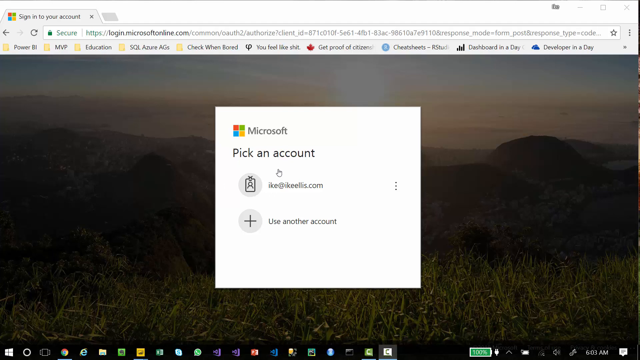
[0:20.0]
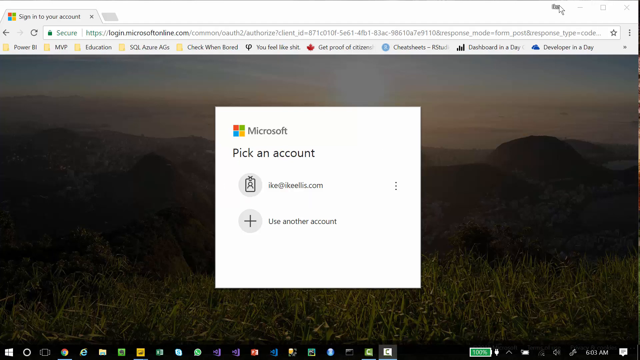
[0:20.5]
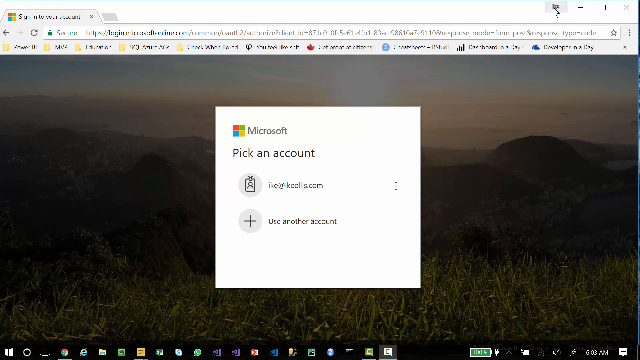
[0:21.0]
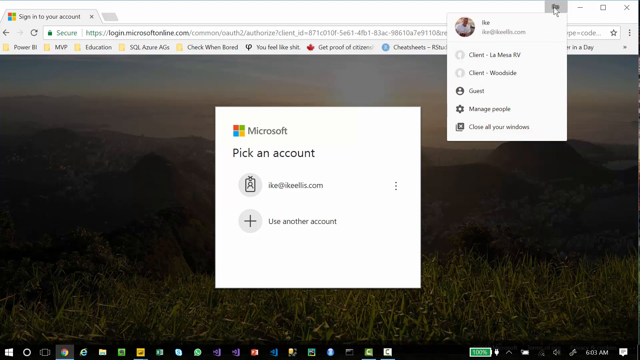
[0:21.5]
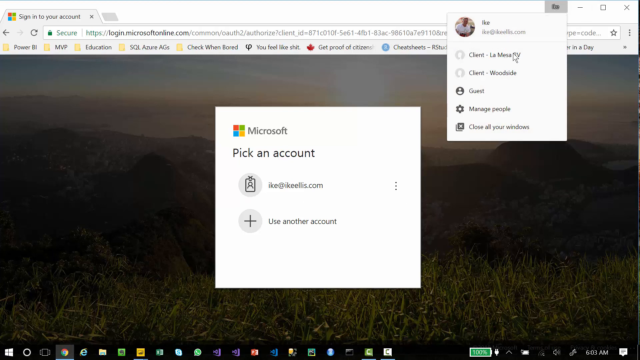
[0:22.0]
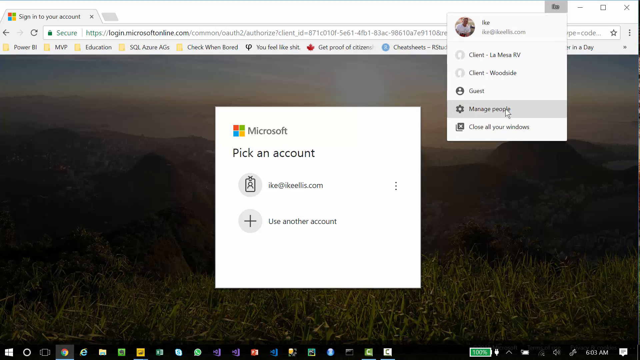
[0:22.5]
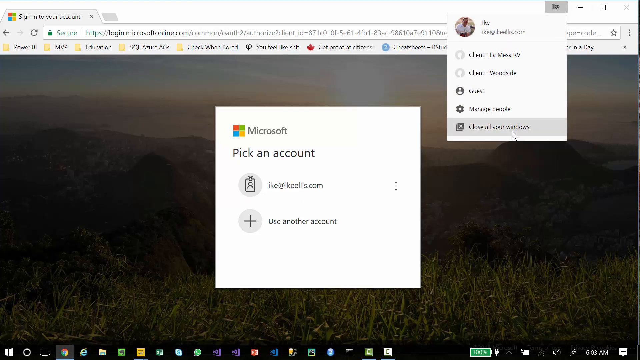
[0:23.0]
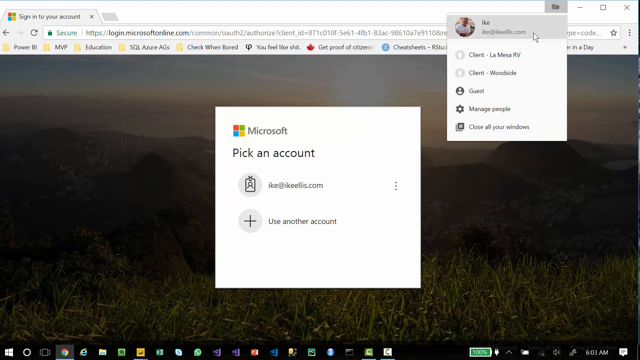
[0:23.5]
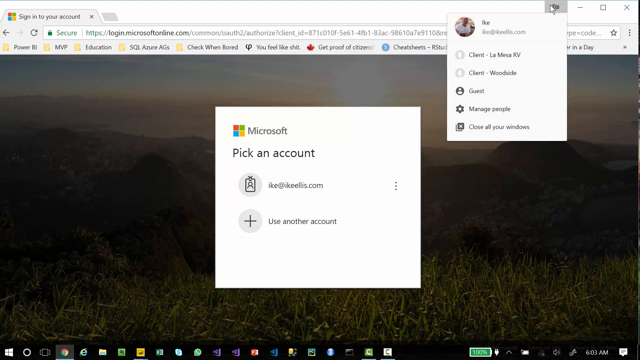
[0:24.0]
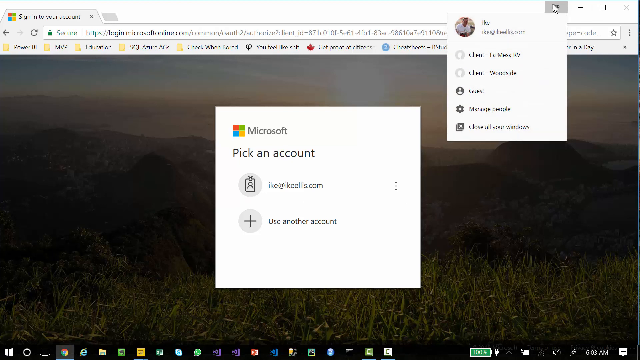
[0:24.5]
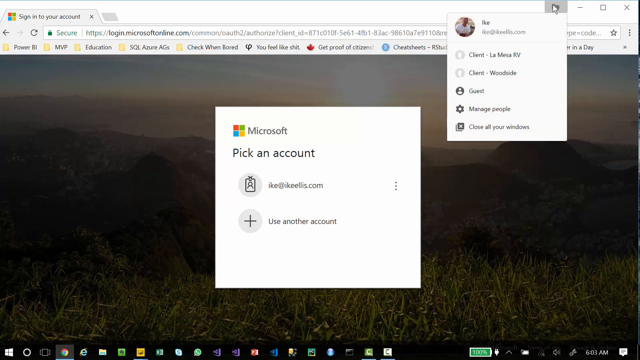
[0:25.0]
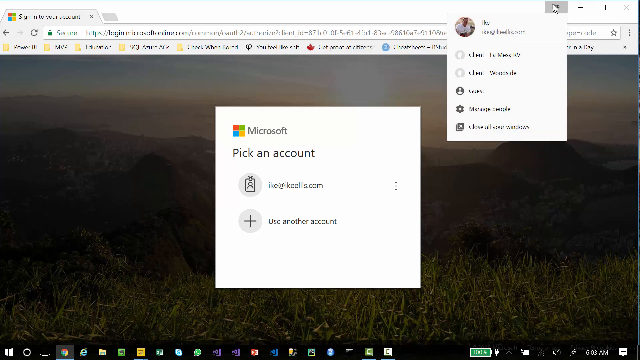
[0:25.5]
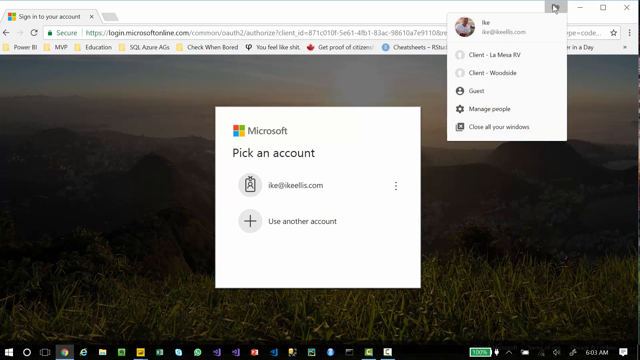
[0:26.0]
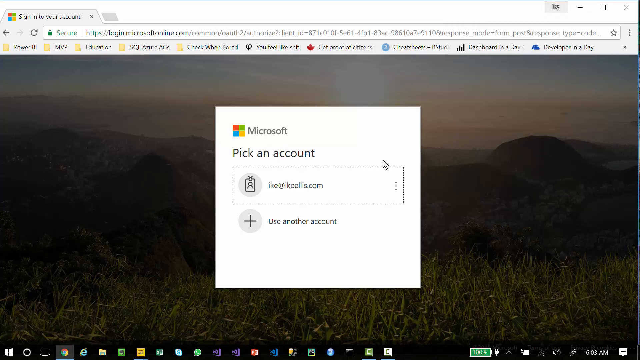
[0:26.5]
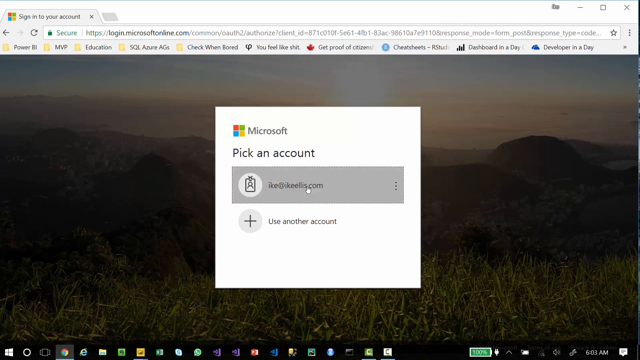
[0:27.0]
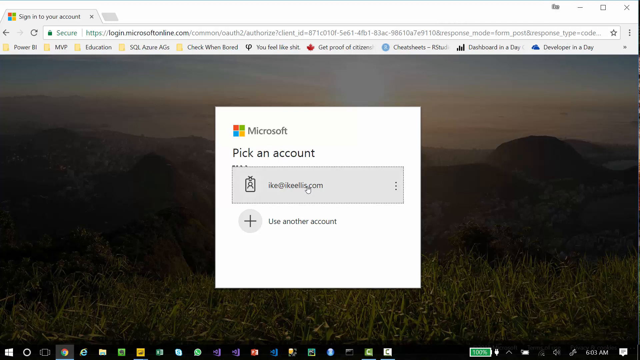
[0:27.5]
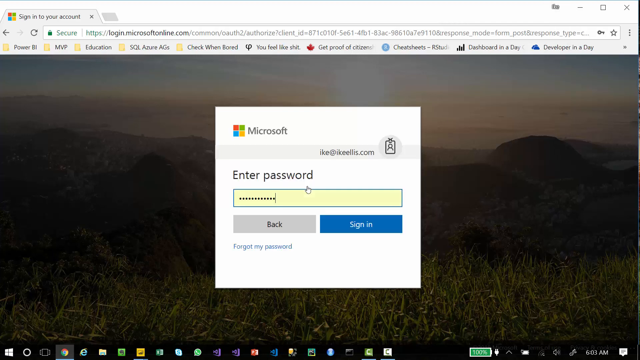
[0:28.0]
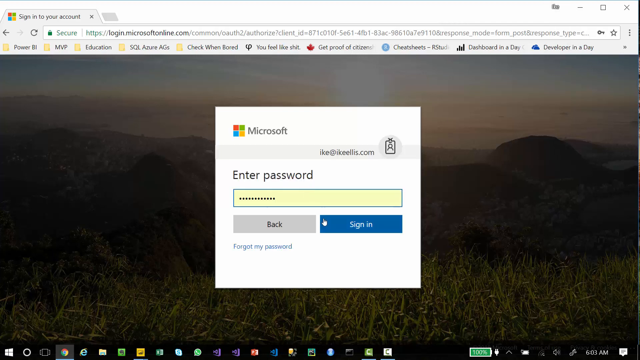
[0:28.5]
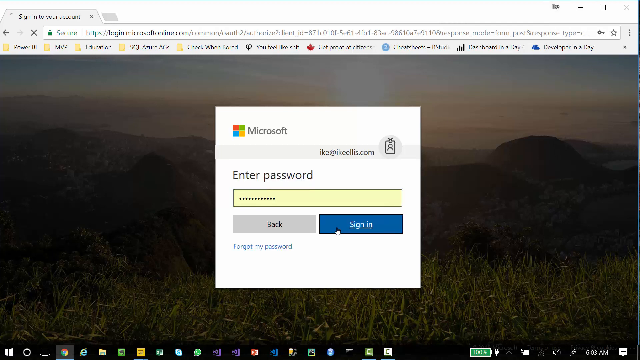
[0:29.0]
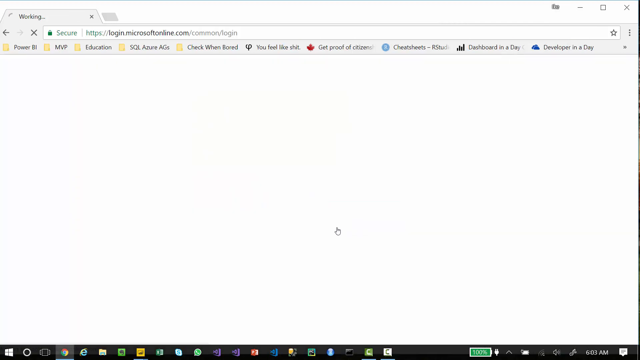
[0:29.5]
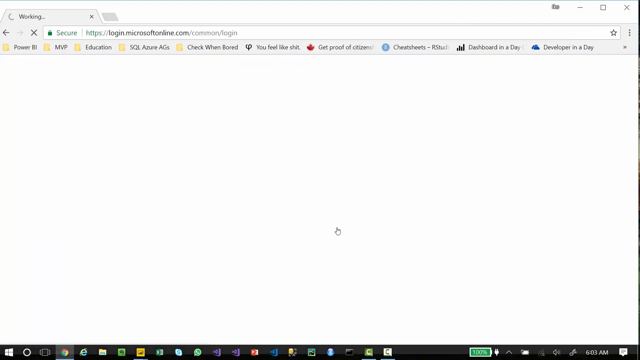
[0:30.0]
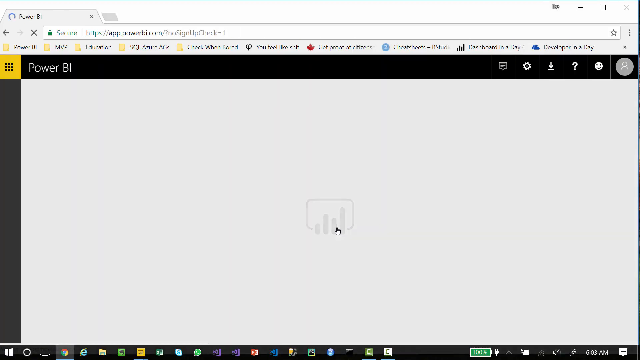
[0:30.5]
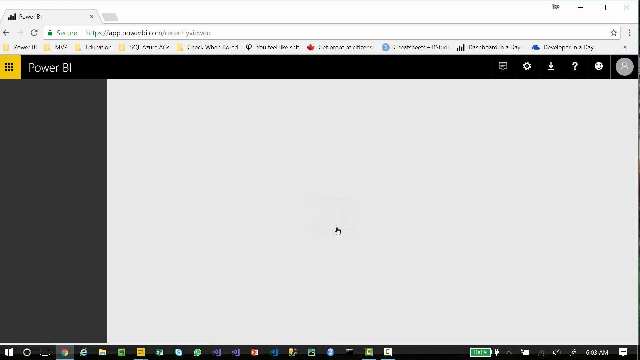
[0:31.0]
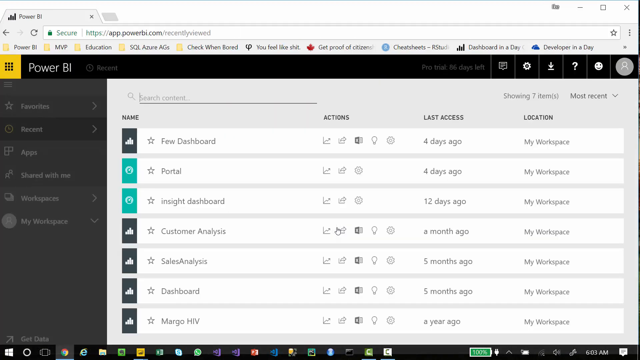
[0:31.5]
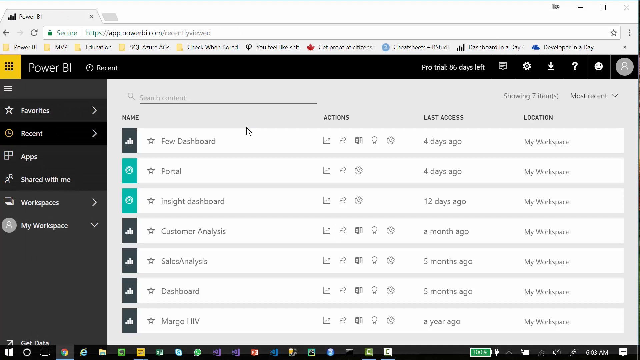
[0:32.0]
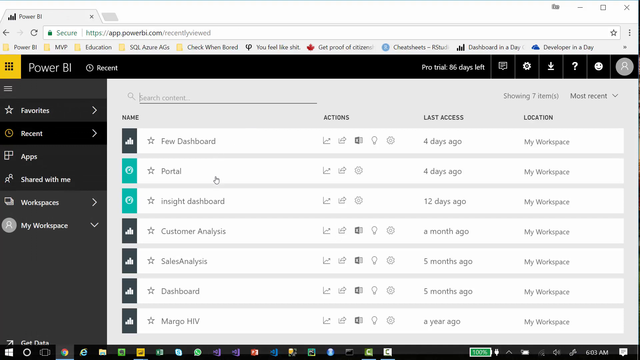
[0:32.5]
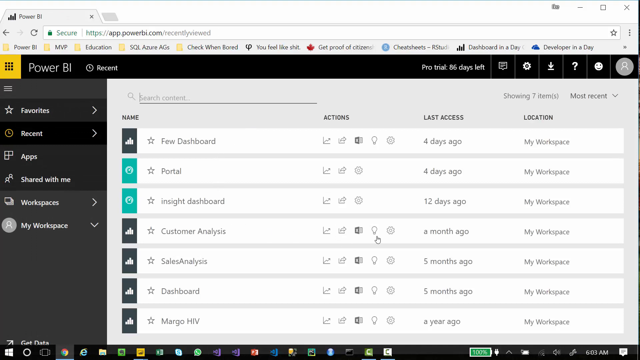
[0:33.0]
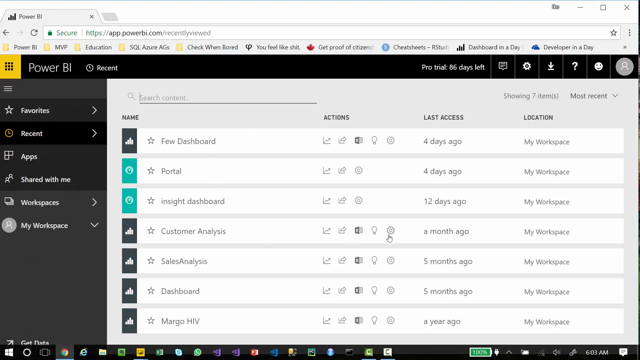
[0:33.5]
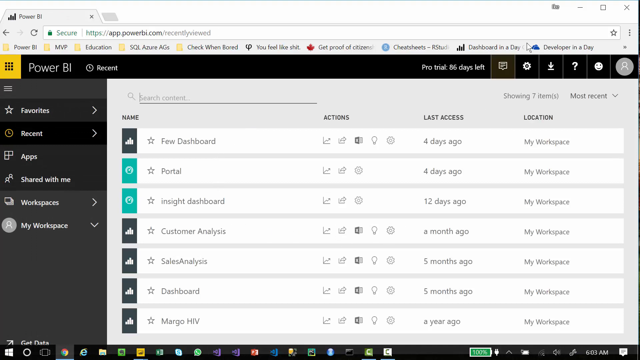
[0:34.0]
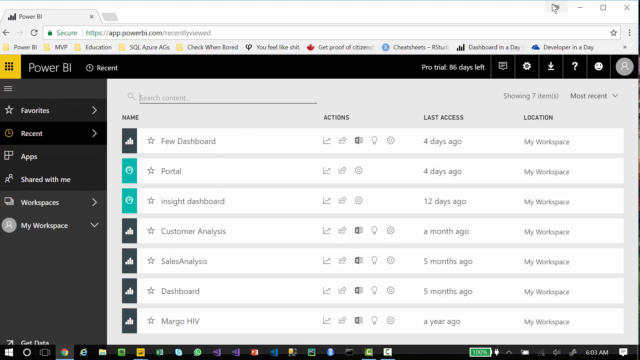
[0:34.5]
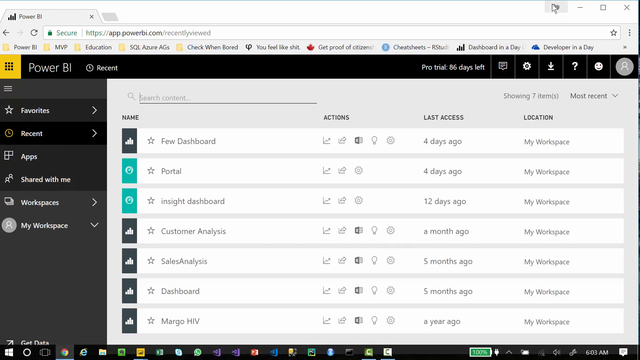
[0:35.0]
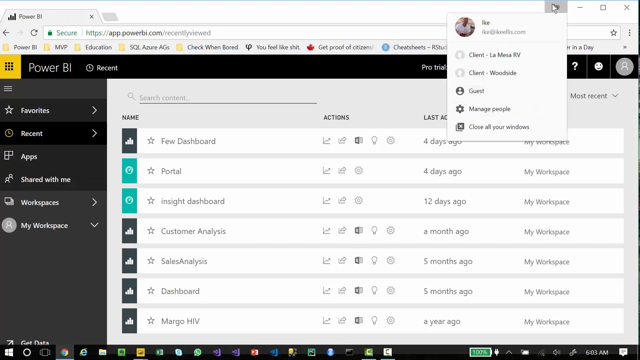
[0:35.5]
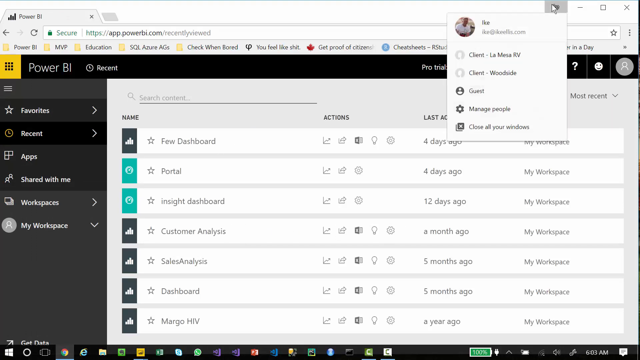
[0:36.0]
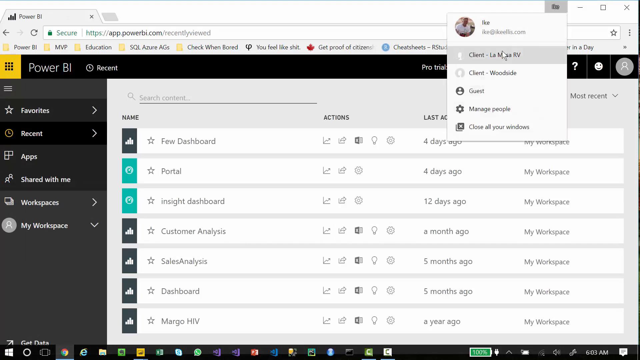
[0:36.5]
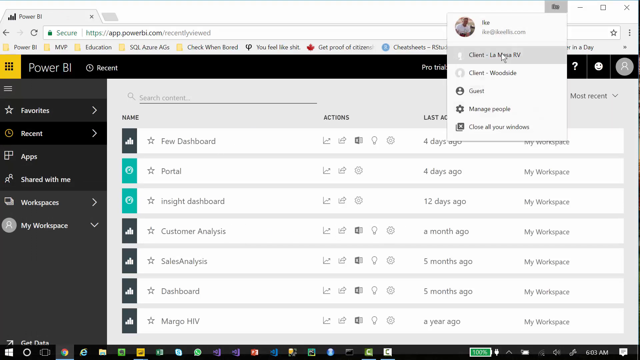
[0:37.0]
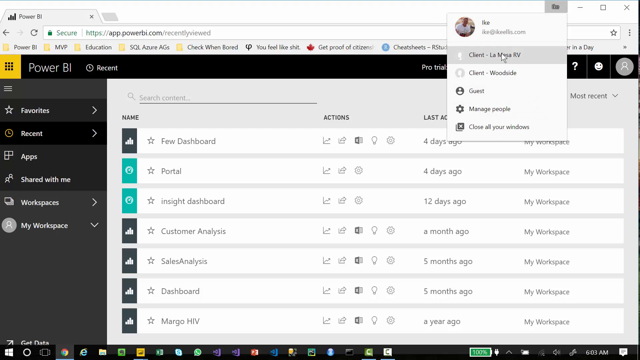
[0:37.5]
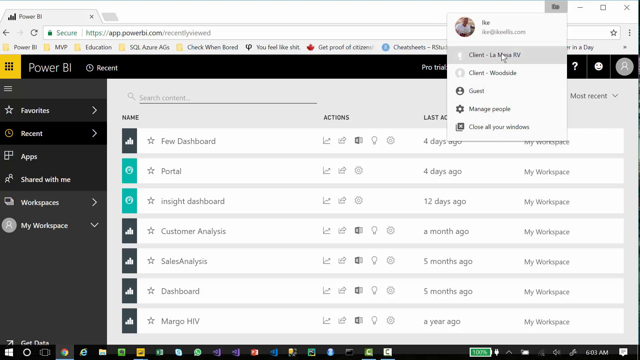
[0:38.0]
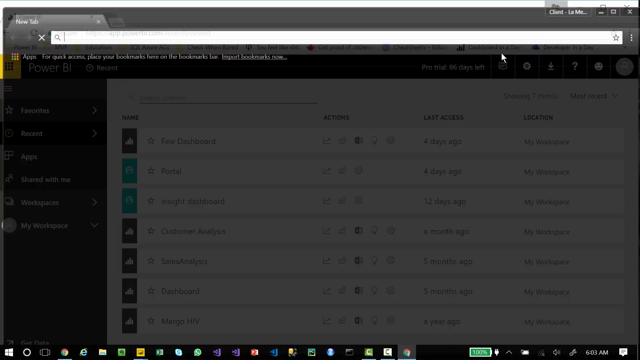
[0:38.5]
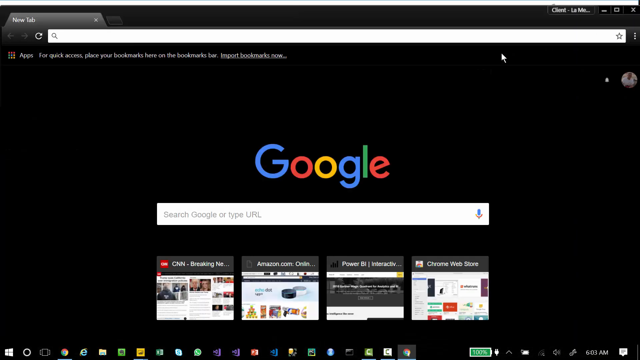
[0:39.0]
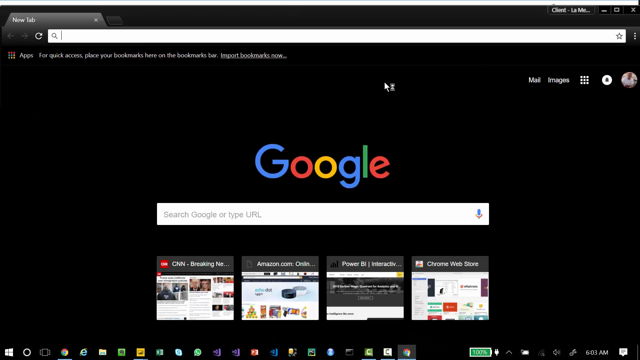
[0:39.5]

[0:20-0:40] Different types of accounts are shown on the Microsoft website, with "login.microsoft.com" at the top, and there is an option to pick an account.